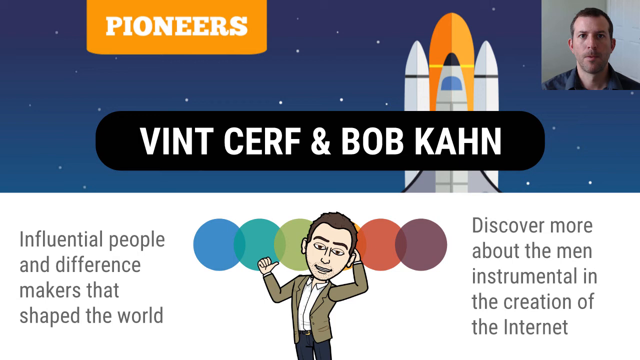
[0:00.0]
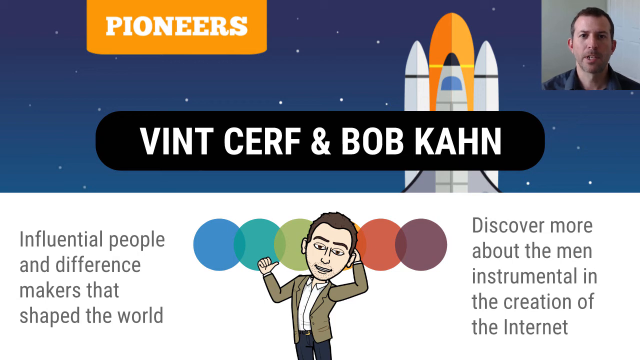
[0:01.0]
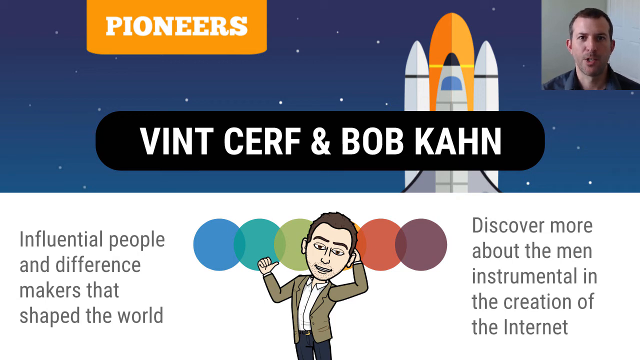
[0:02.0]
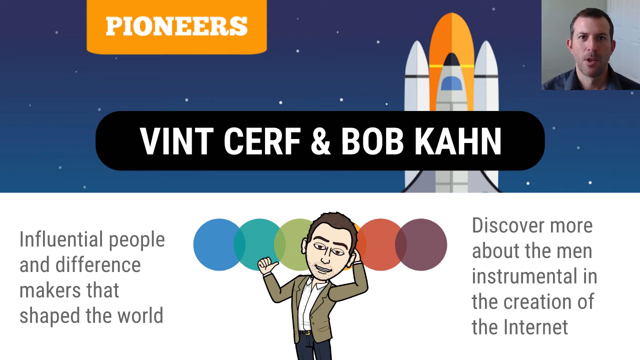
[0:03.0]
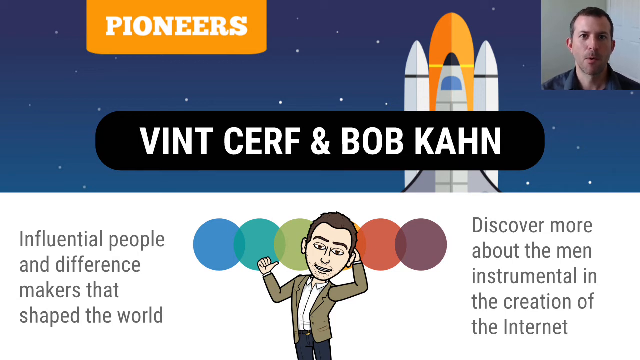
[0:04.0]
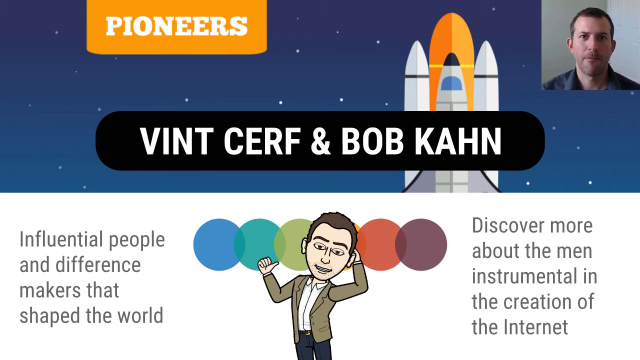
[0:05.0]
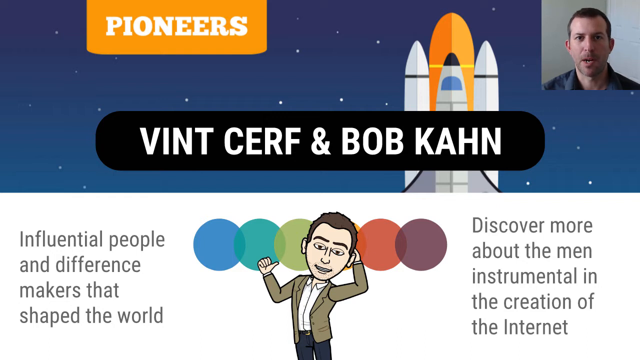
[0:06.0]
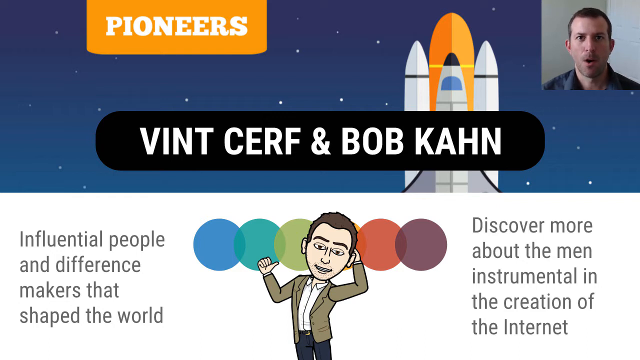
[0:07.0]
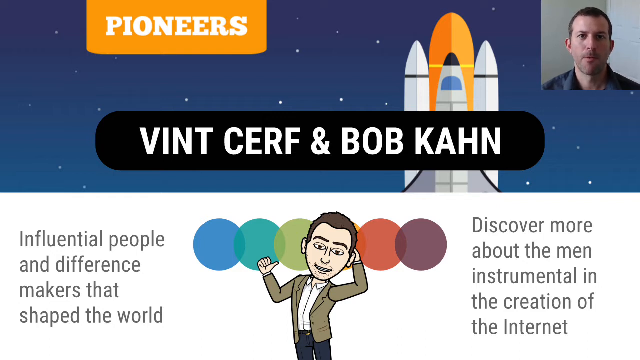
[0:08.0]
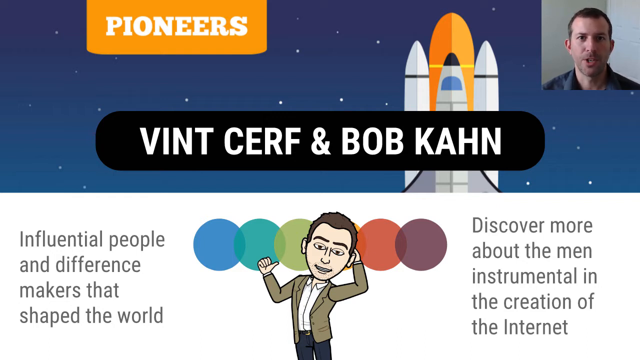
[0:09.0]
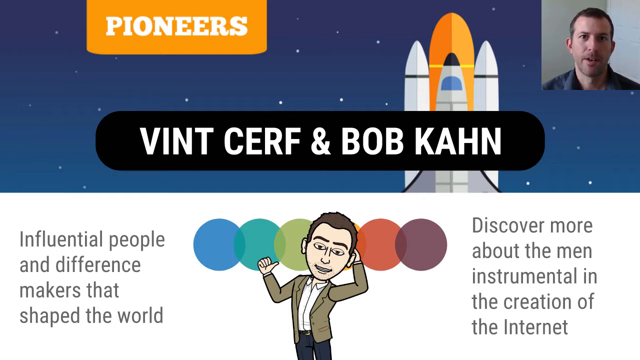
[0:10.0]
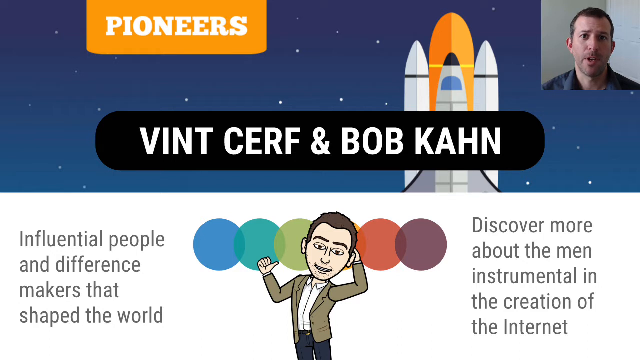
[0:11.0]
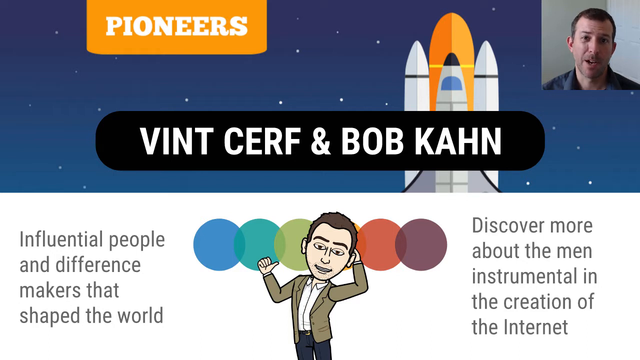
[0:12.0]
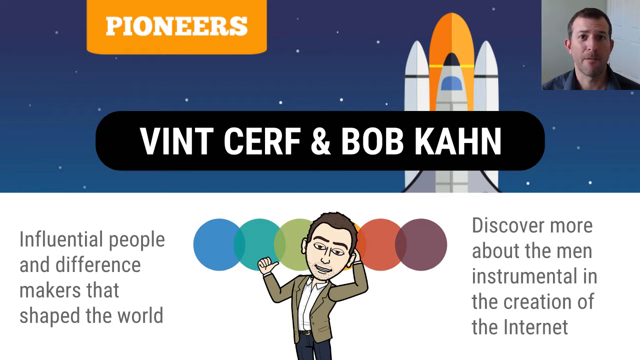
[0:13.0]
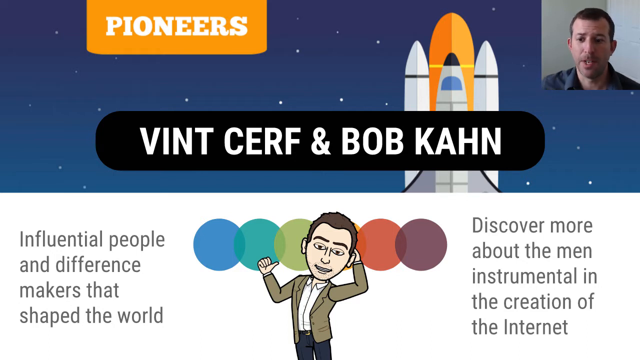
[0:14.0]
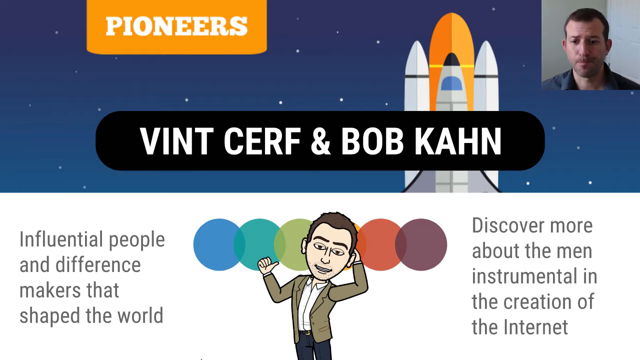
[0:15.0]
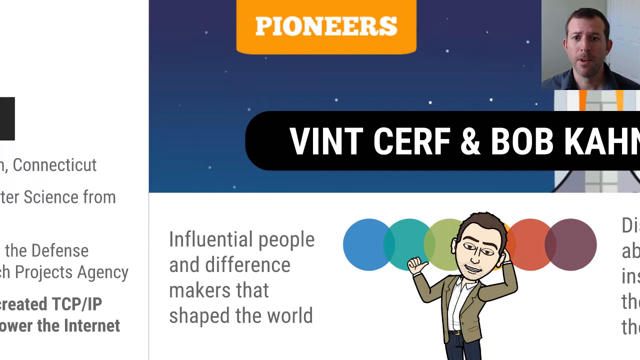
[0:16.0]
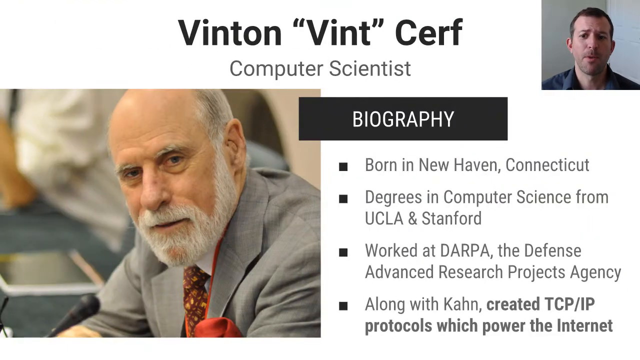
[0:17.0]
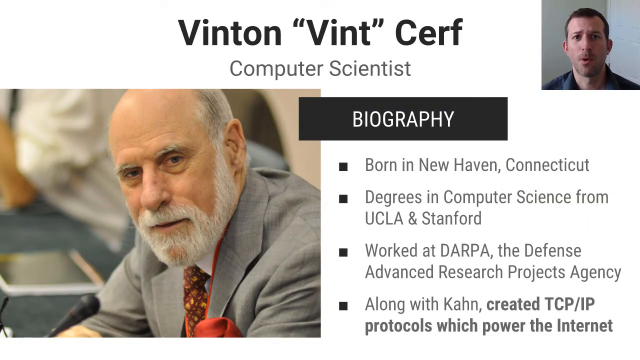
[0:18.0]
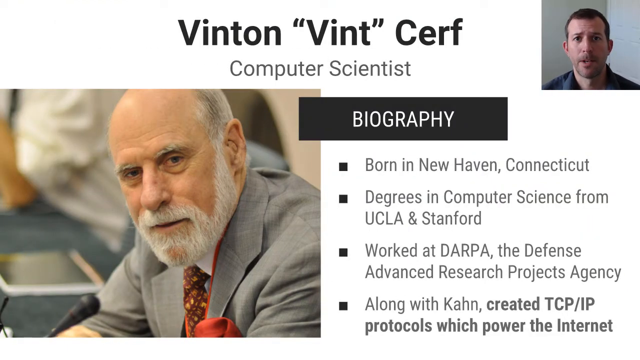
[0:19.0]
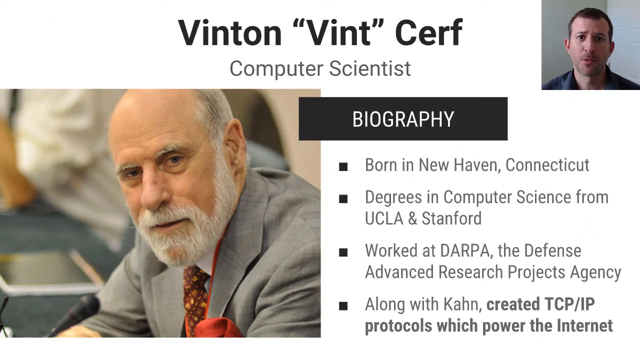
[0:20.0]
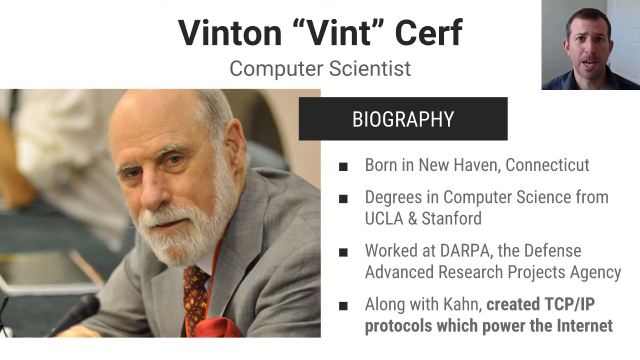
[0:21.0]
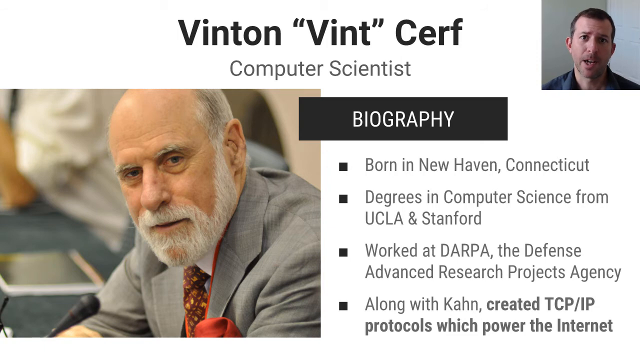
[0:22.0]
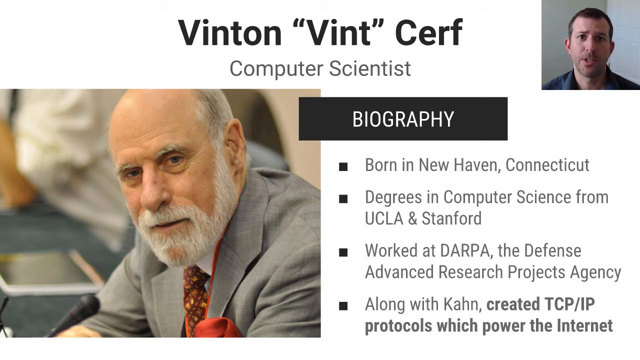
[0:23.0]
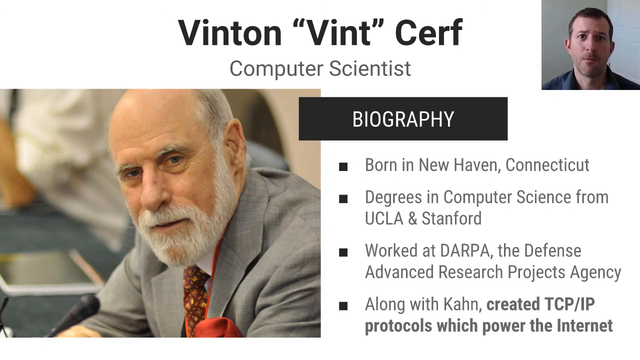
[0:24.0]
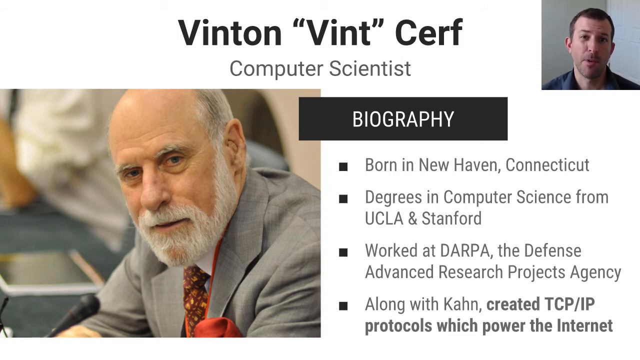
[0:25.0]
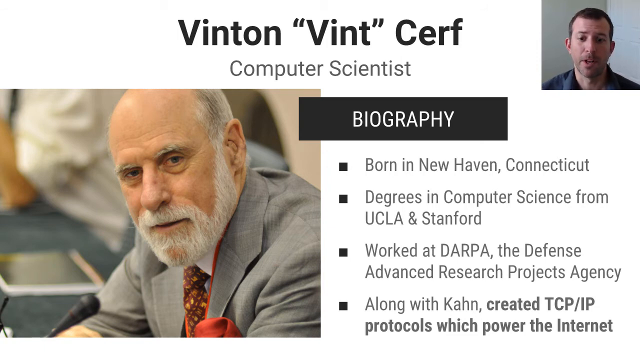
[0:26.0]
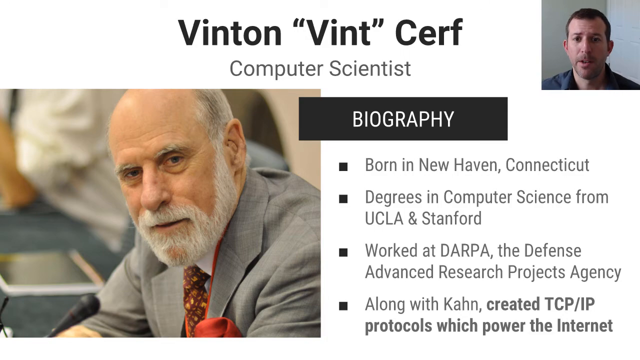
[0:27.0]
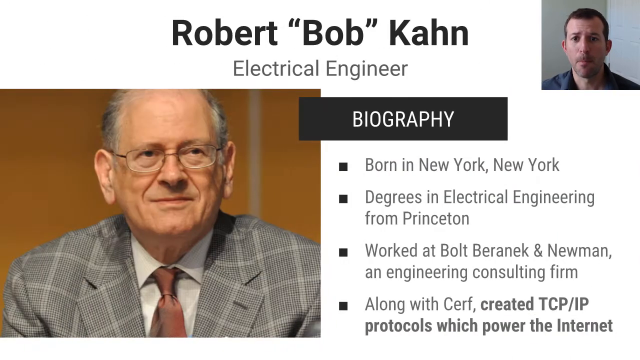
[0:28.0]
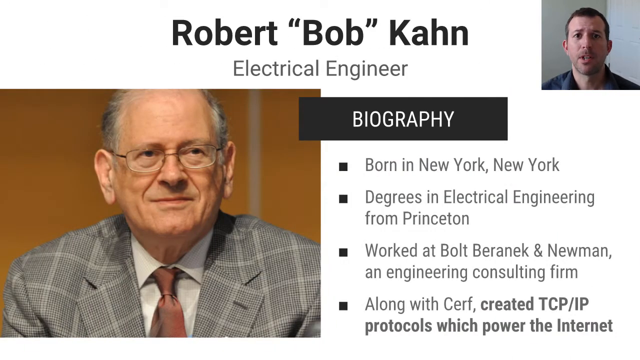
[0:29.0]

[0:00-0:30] A slide from an animation-style slideshow fills the screen. In a small square box at the top right, a white man with short dark hair and a navy-coloured shirt narrates the slide. The slide is split horizontally: the top half is a dark navy sky with white dots representing stars across the navy banner. On the top right is an orange rectangle with the word "PIONEERS" in capital white text, and between that box and the video of the man is a space shuttle pointing upwards. The bottom half of the screen has a white background. In the middle stands a man who looks a little like the narrator, with his left hand behind his head and his right hand in a thumbs-up gesture. Behind him are six interlocking circles of different colours. To the left of the man the text reads "INFLUENTIAL PEOPLE" and "DIFFERENCE MAKERS WHO SHAPE THE WORLD", and on the right it reads "discover more about the men instrumental in the creation of the internet". Along the bottom of the blue band at the top, a long black oblong text box reads "Vint Cerf and Bob Kahn" in white capital letters. After a few seconds the next slide slides in from the left side of the screen over to the right. It shows a picture of Vint Cerf in a square box on the bottom left and, to the right, a black rectangular box reading "biography" in white capital letters, with bullet points describing the man in the photo beneath it. After a few more seconds, another slide comes across the screen from left to right.